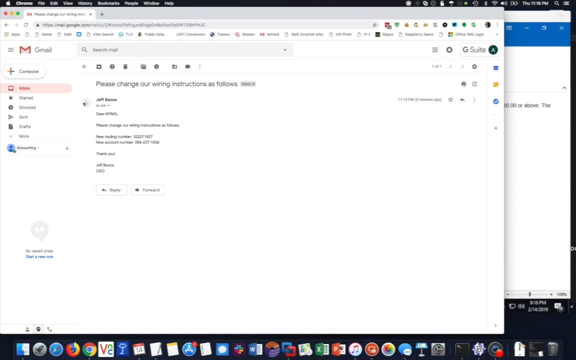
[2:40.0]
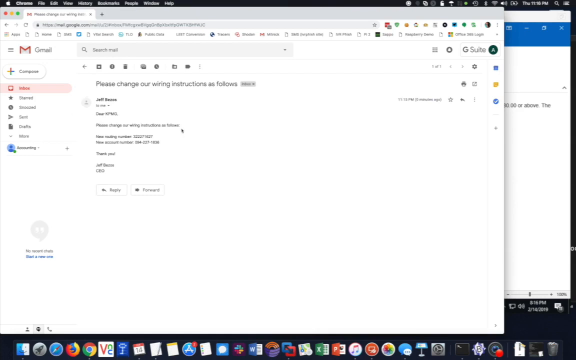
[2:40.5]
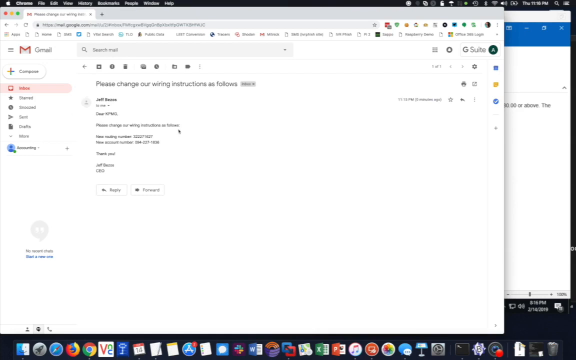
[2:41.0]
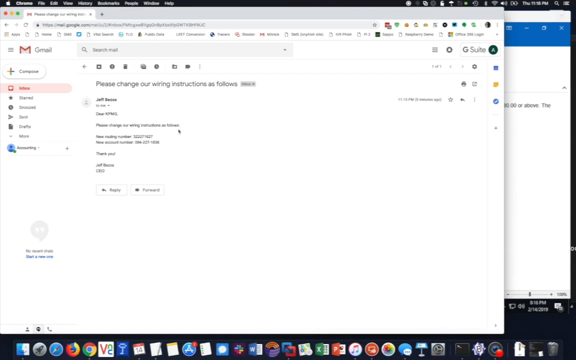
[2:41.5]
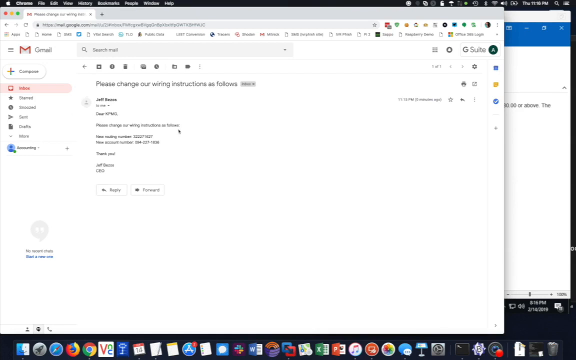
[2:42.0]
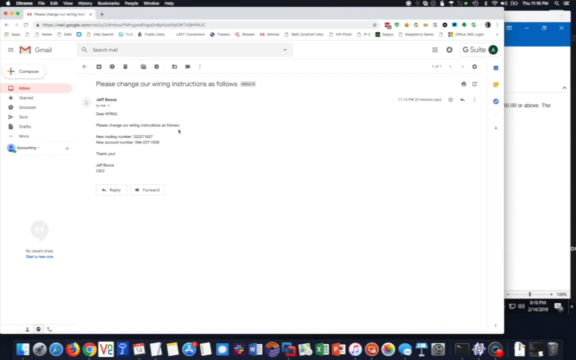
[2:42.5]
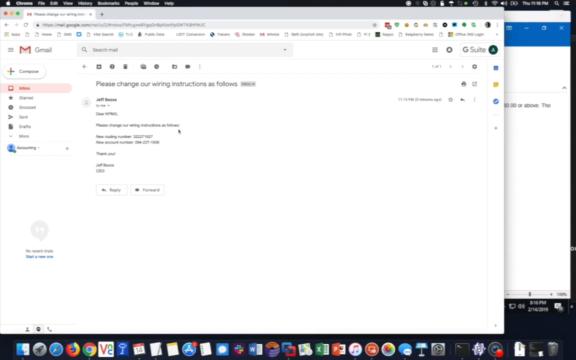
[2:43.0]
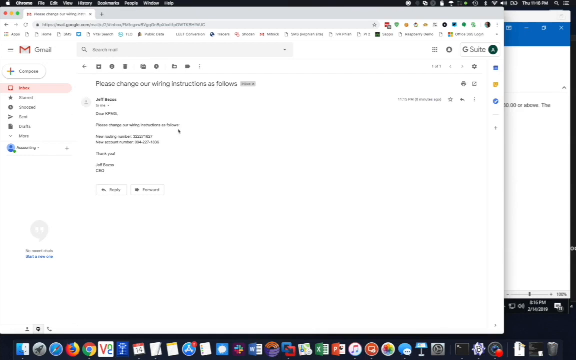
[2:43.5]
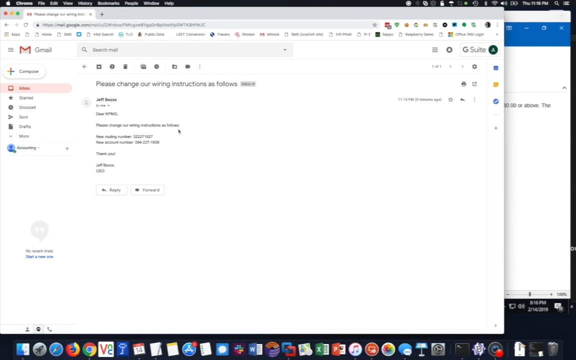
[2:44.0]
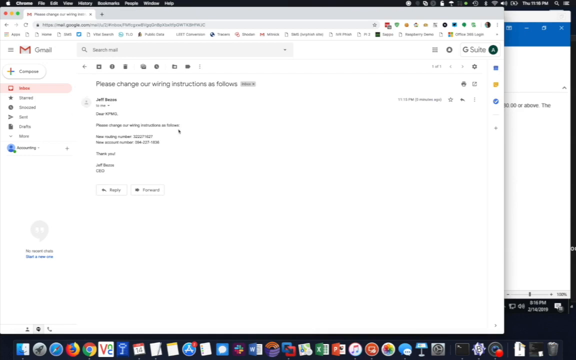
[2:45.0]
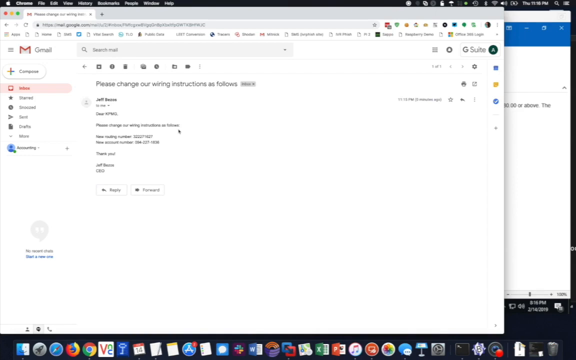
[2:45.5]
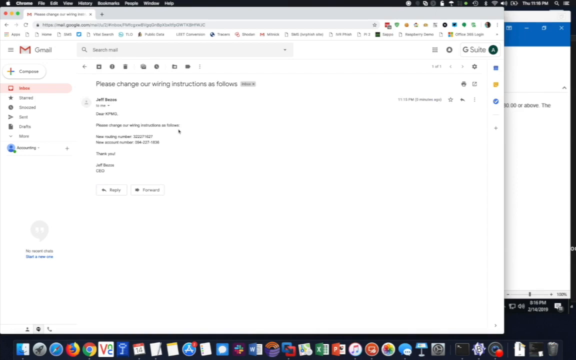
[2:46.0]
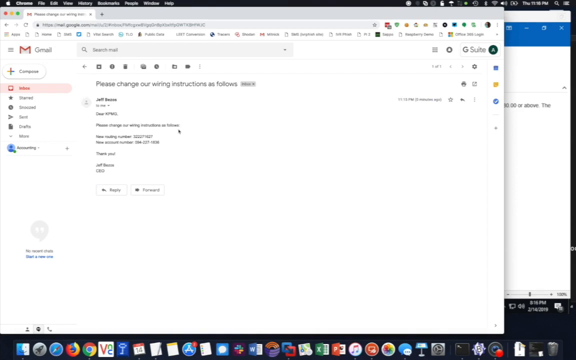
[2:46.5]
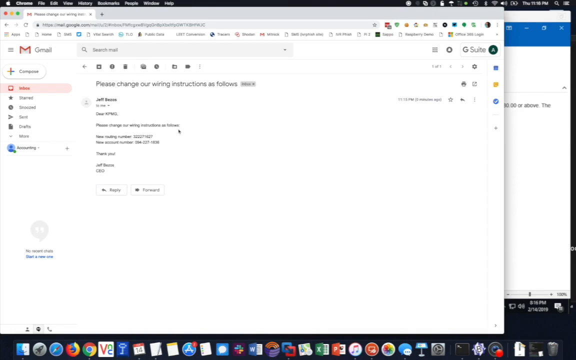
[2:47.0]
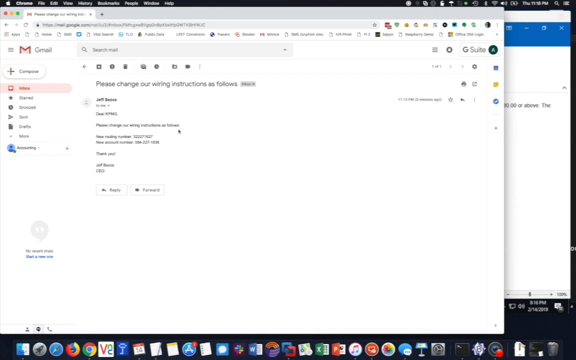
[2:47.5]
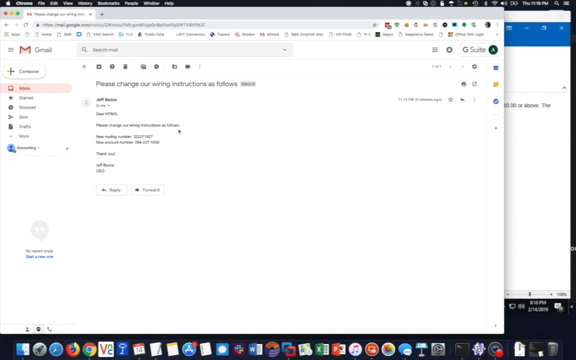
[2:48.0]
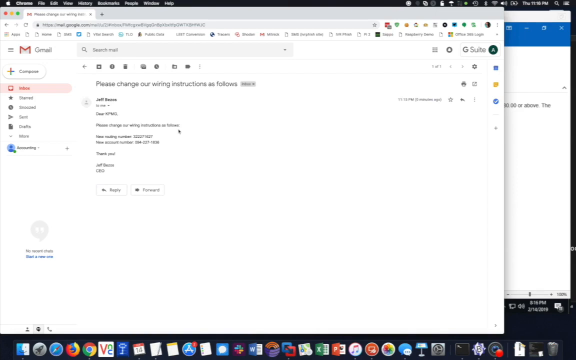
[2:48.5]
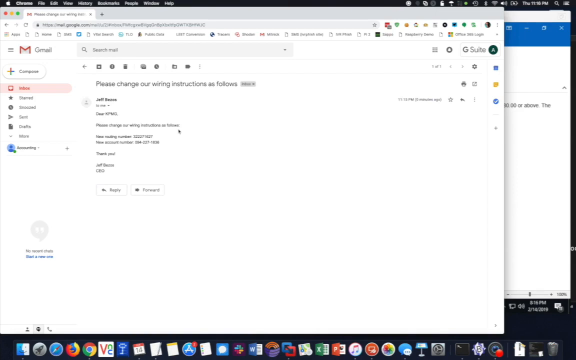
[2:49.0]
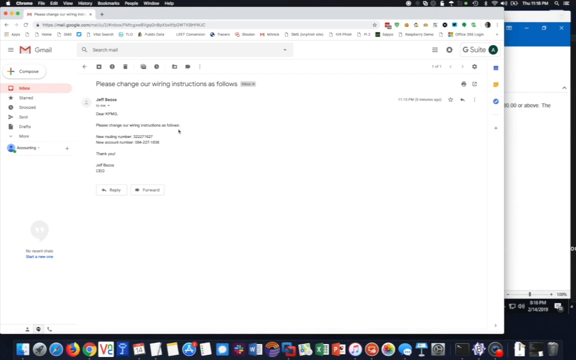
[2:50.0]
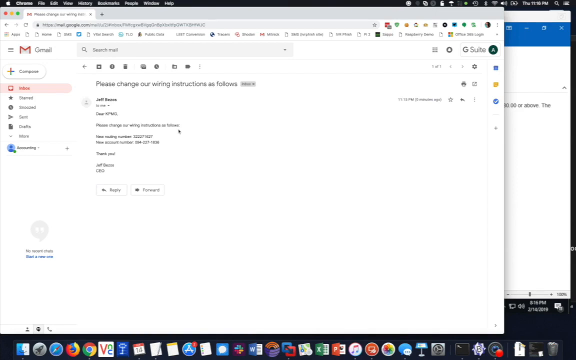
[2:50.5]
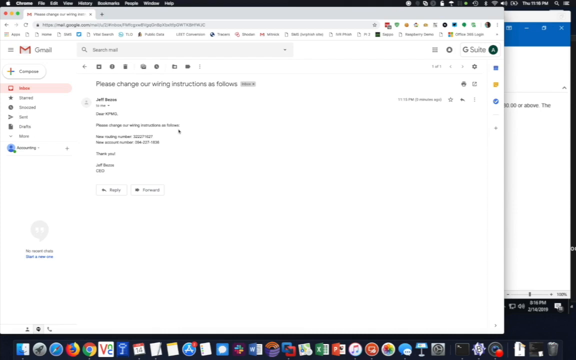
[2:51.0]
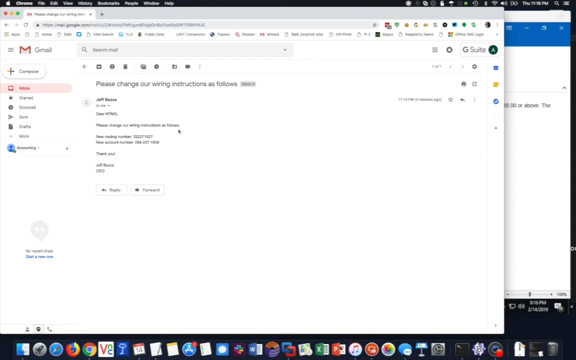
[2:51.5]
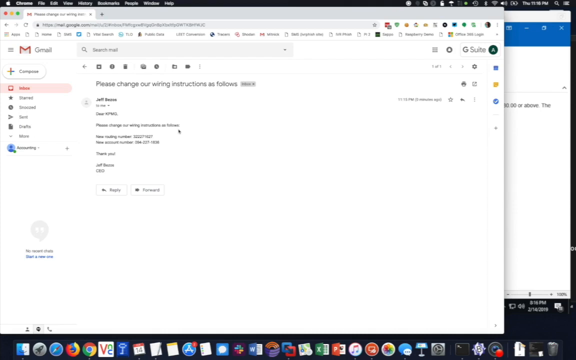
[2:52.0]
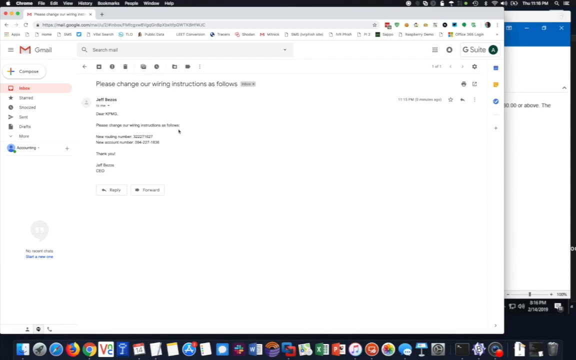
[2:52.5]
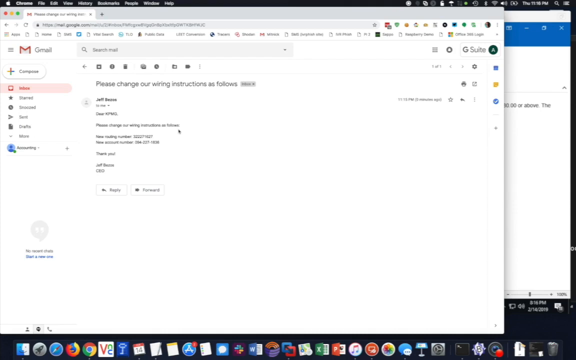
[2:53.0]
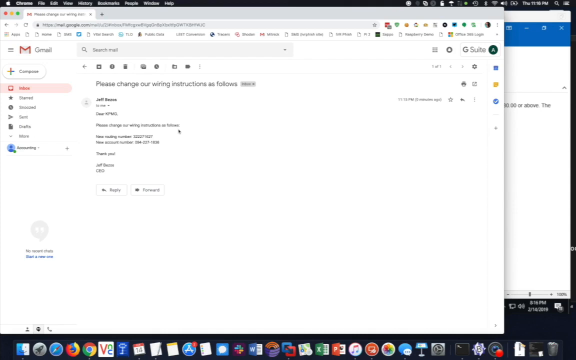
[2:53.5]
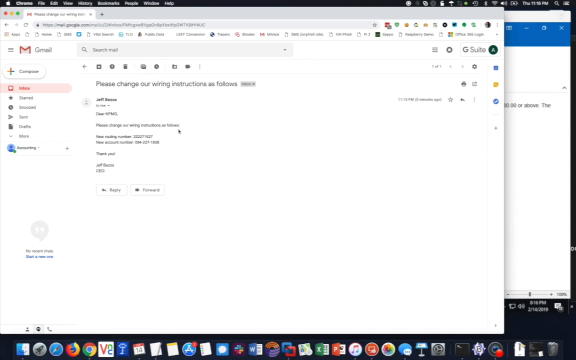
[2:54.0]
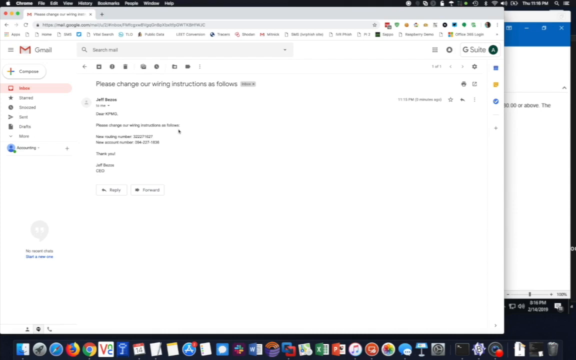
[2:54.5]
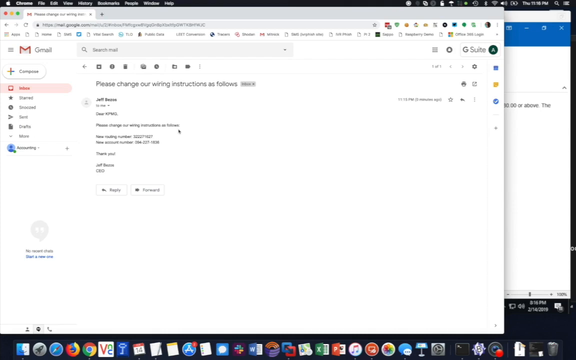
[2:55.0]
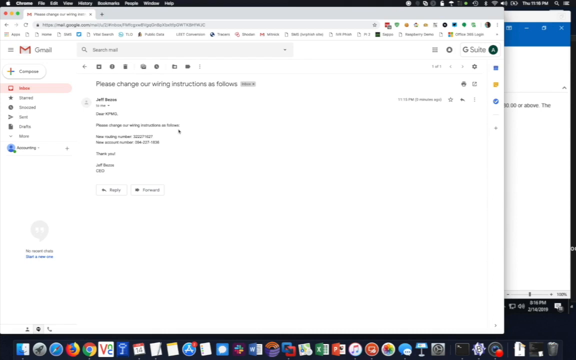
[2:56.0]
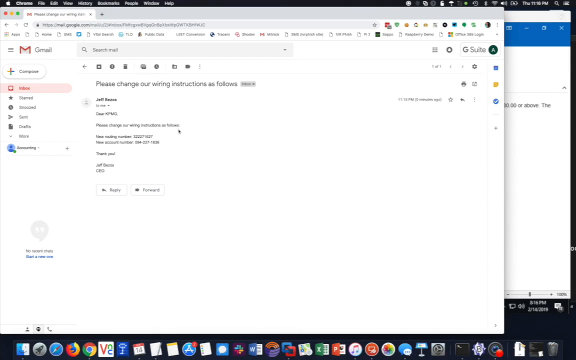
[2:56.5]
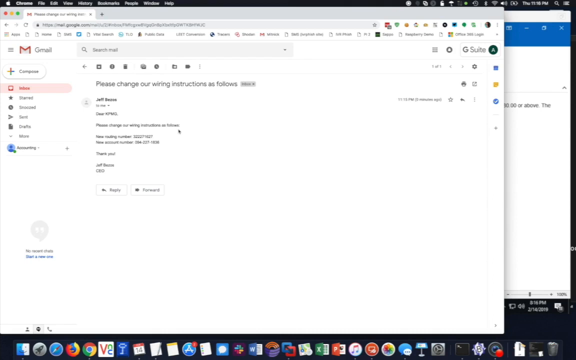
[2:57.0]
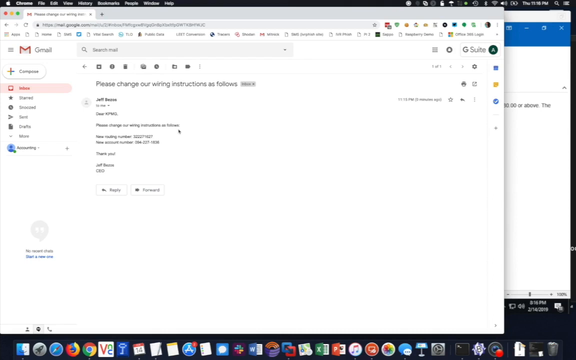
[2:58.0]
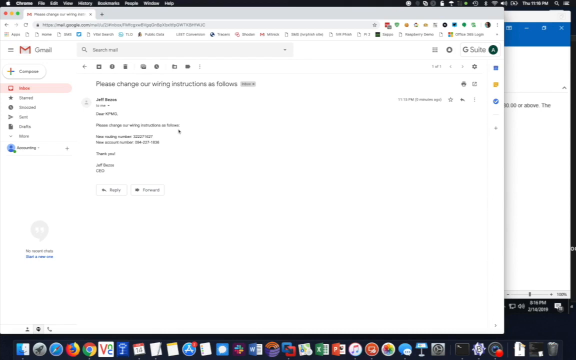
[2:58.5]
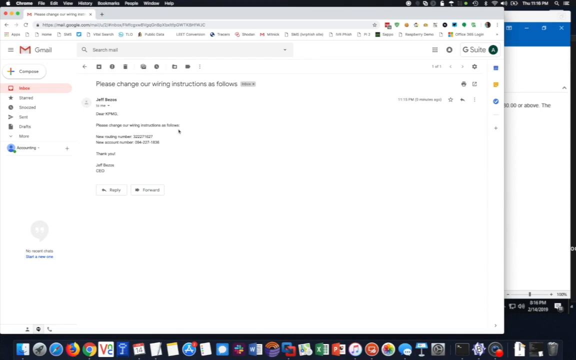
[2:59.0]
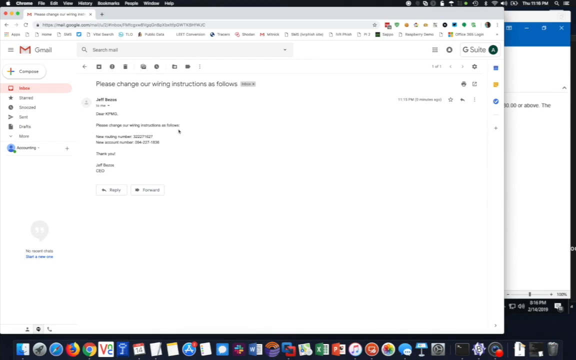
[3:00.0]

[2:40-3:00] A Gmail page is open on a computer screen, with the Inbox tab highlighted and an email open. The email subject is "Please change our wiring instructions as follows." It appears to have been sent from Jeff Bezos. It reads "Dear KPMG, Please change our wiring instructions as follows." A line says "New routing number" and another says "New accounting number," with numbers after each. It then says "Thank you," and the name at the bottom is Jeff Bezos, CEO. The arrow cursor is next to the email text and does not move or click on anything else. Behind this open page, the Outlook email page is visible on the right. There is no activity on the screen.